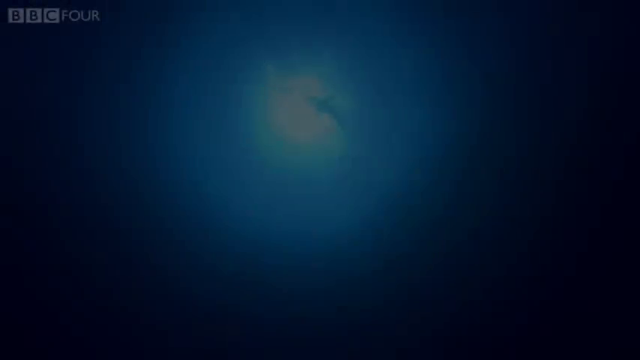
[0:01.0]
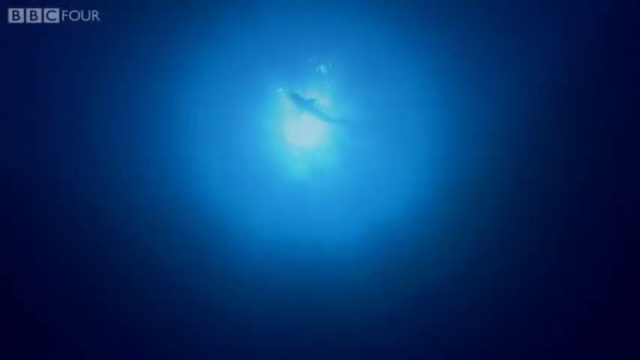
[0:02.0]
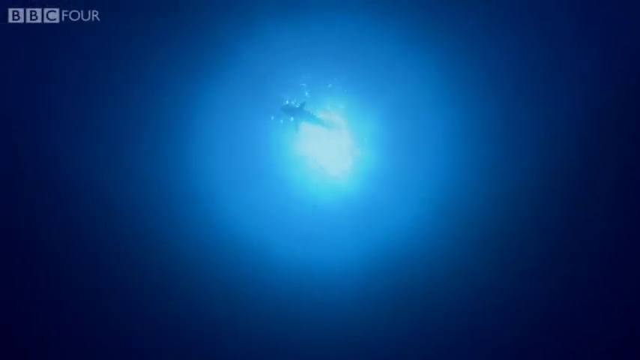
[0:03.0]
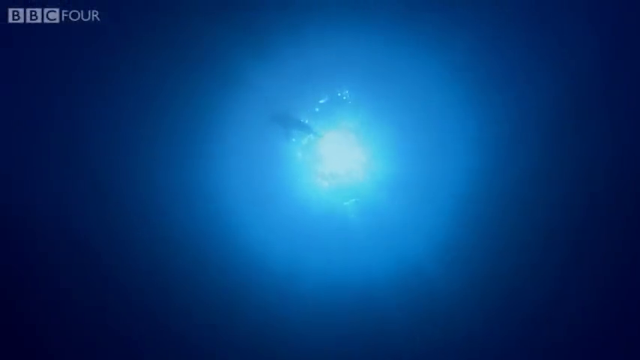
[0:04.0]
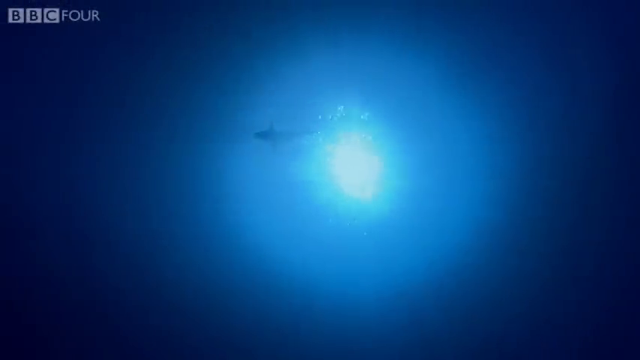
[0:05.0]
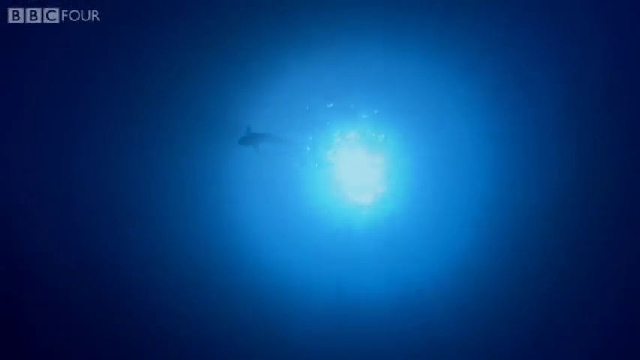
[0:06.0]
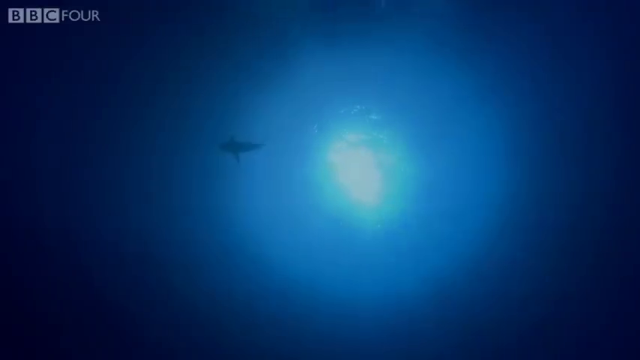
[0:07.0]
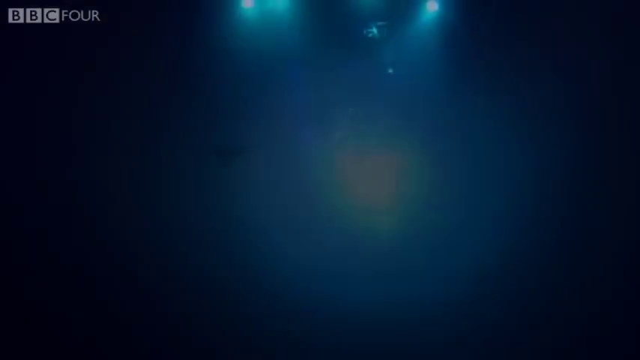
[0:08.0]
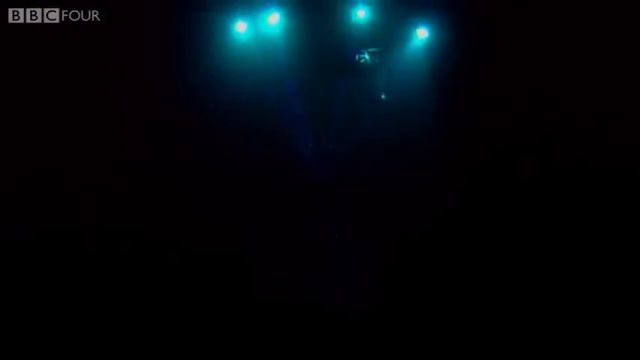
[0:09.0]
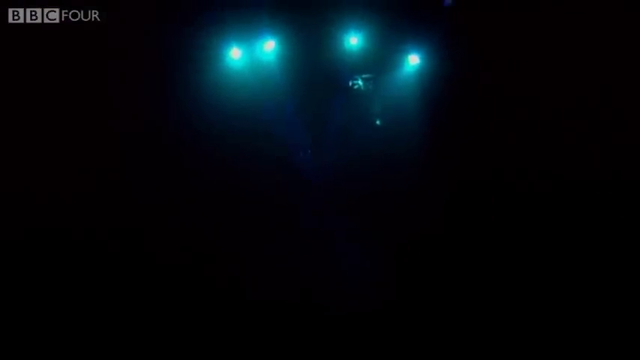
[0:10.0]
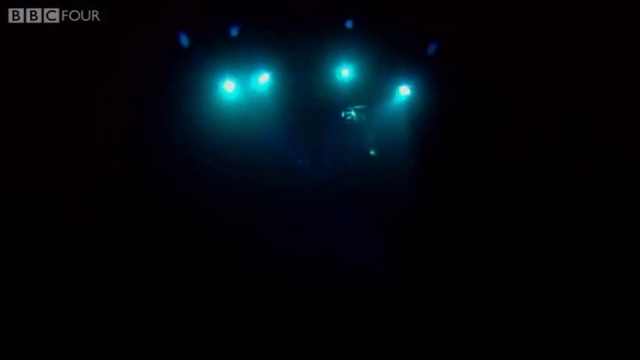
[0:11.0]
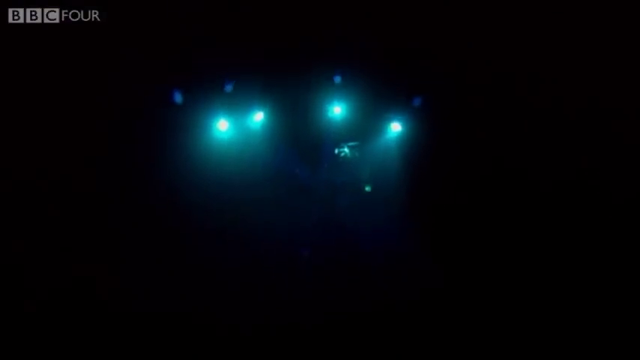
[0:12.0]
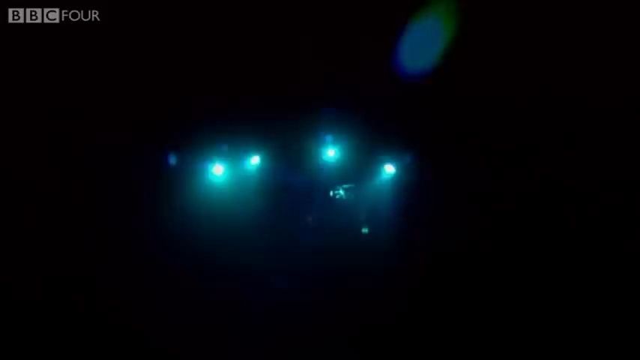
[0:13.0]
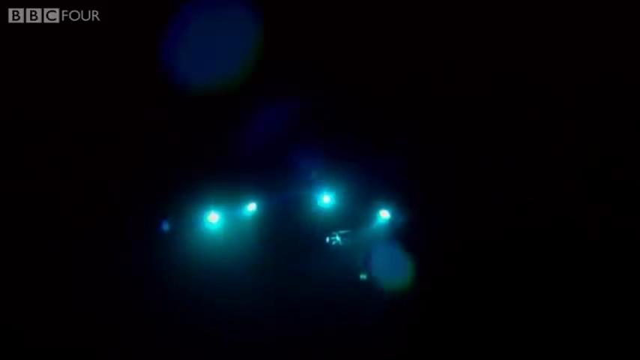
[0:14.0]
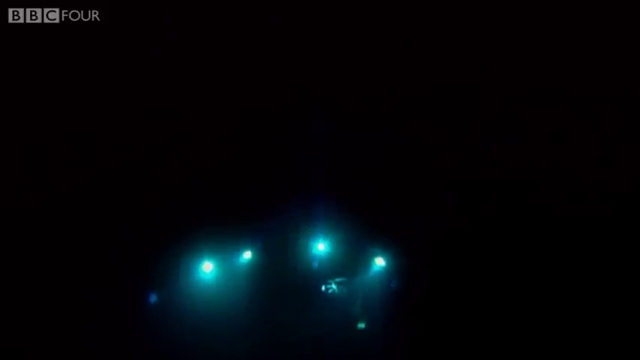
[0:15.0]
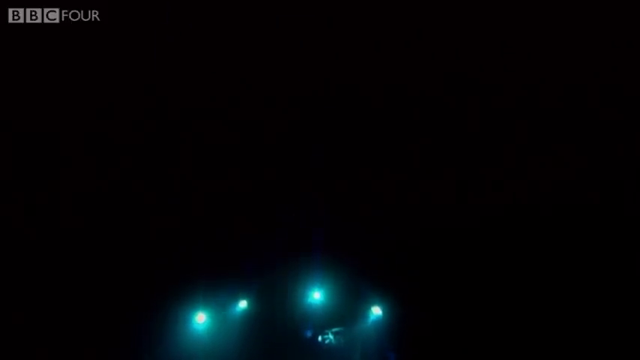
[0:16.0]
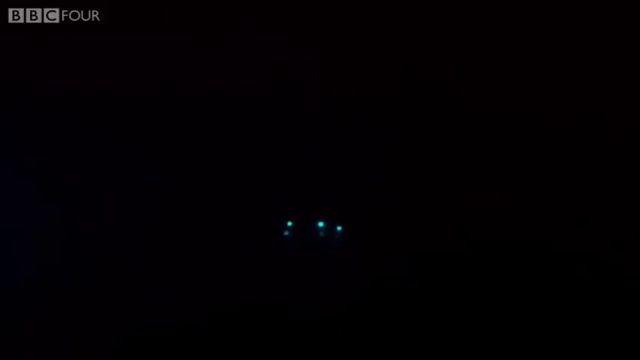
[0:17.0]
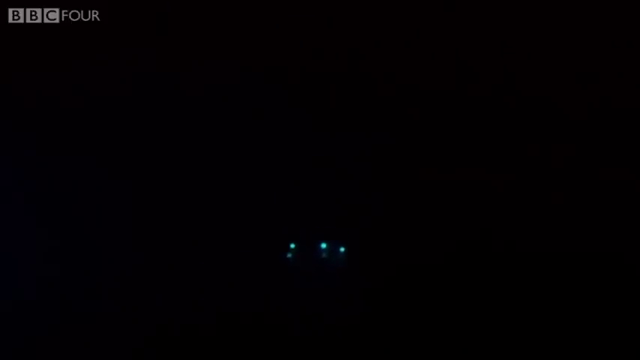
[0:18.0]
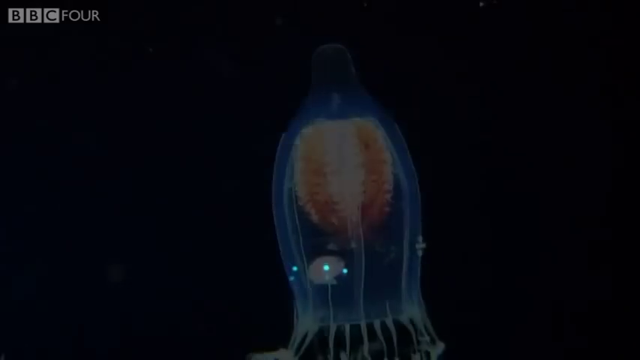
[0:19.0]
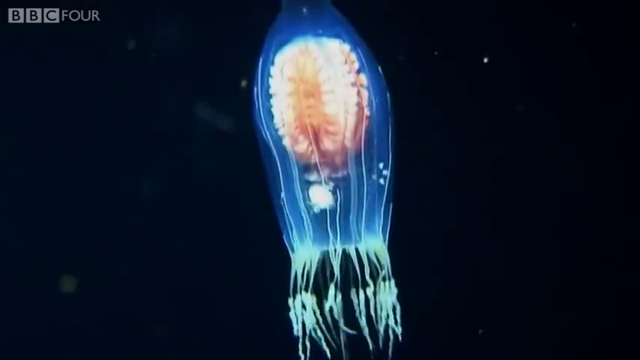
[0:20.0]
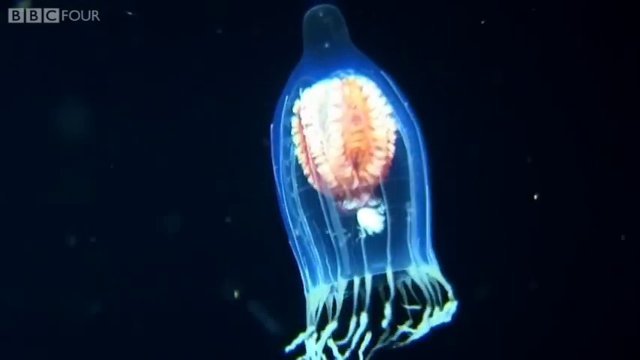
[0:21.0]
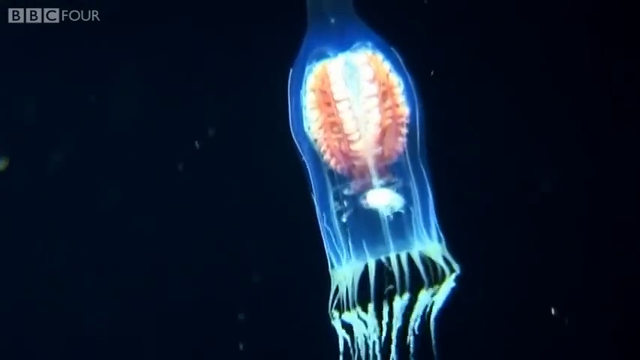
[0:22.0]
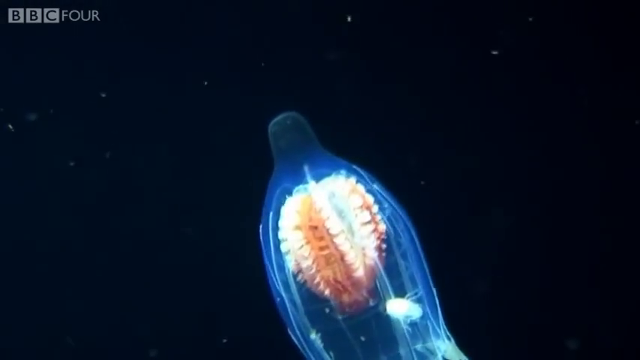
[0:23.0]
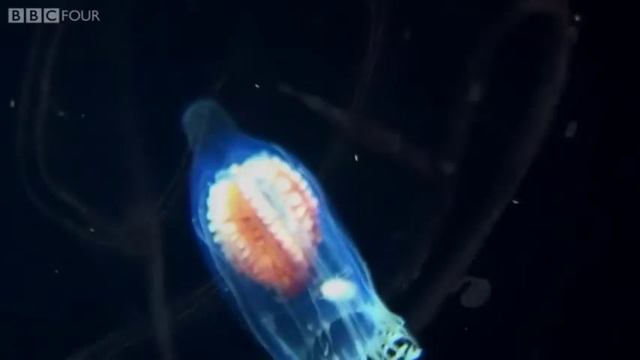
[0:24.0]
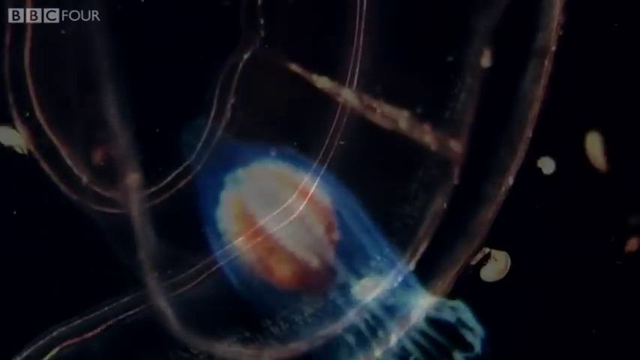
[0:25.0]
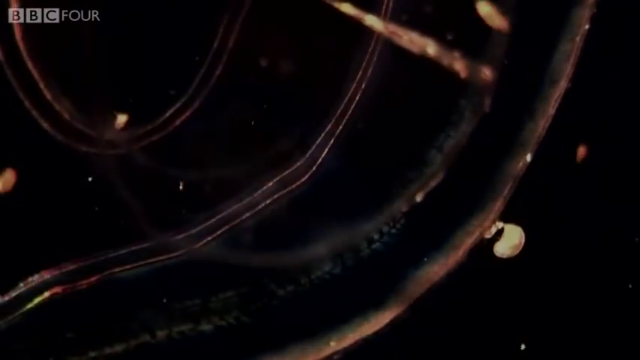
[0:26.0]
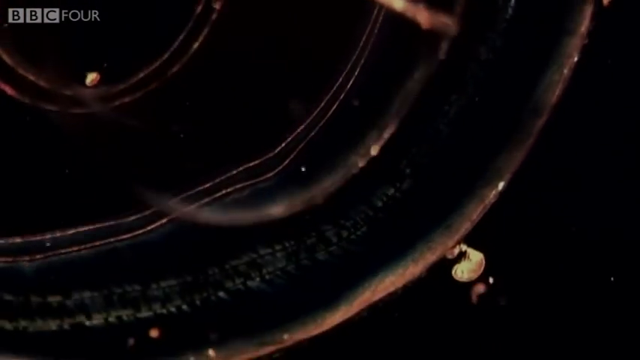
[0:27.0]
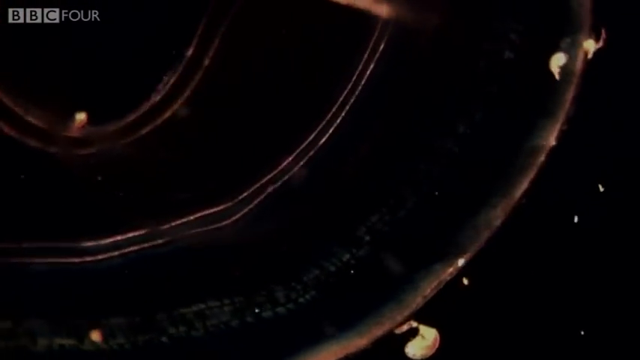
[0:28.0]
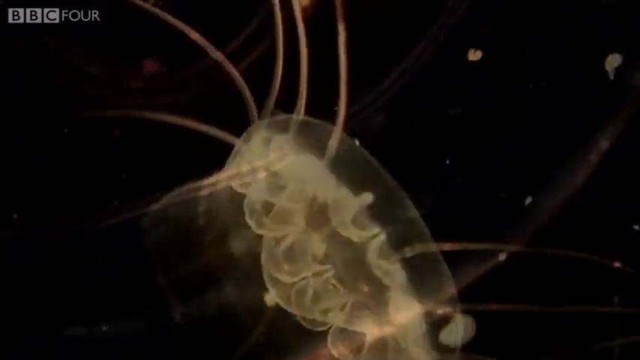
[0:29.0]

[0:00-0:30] Filmed from underwater with the camera pointed up, the video shows sunlight above the surface of the water shining down, and a shark swims from the right side of the screen to the left, directly between the sunlight and the camera. The video then transitions to a jellyfish swimming upward, its tentacles flowing in the water underneath it. Next comes another crustacean in the ocean, apparently a tiny, mostly see-through shrimp, whose body tentacles are visible as it swims in a dark area of the ocean. A watermark in the upper left corner of the screen reads "BPC4".